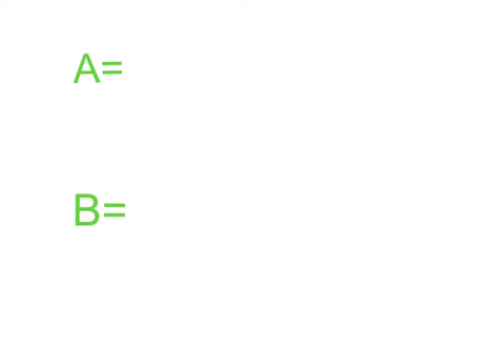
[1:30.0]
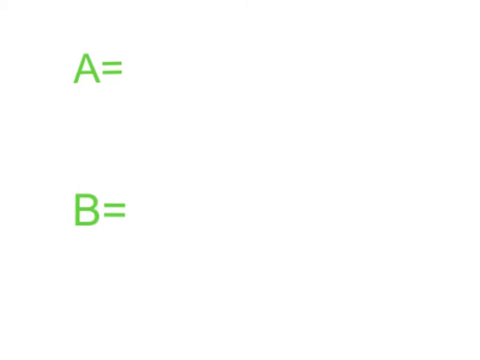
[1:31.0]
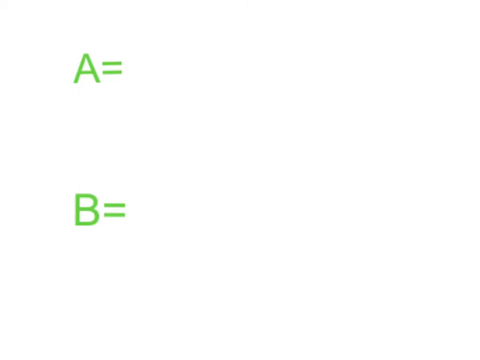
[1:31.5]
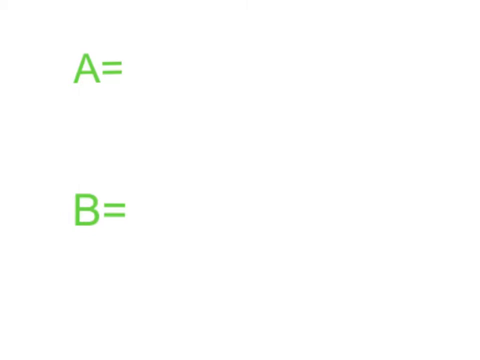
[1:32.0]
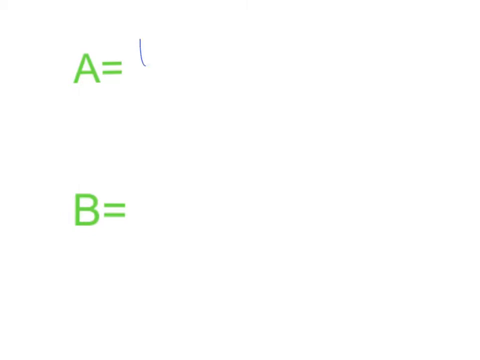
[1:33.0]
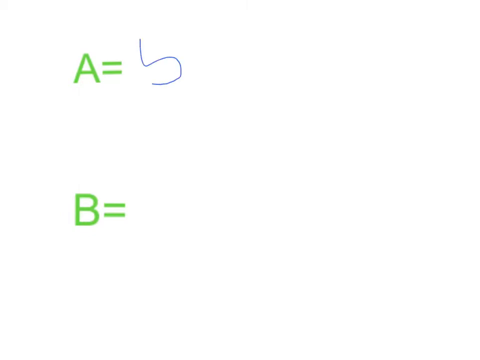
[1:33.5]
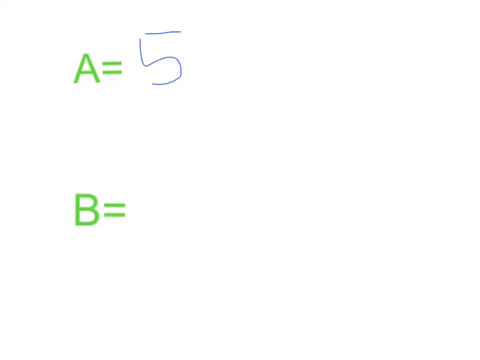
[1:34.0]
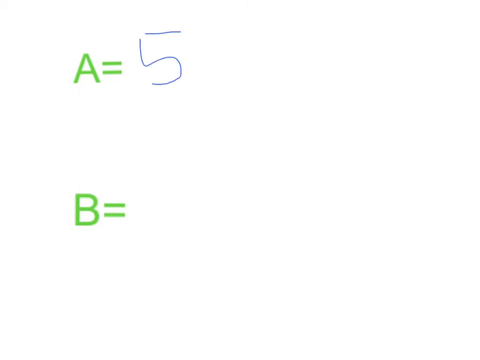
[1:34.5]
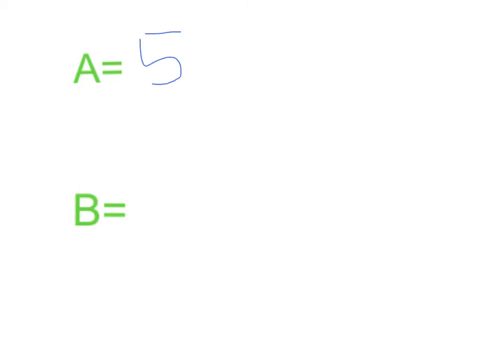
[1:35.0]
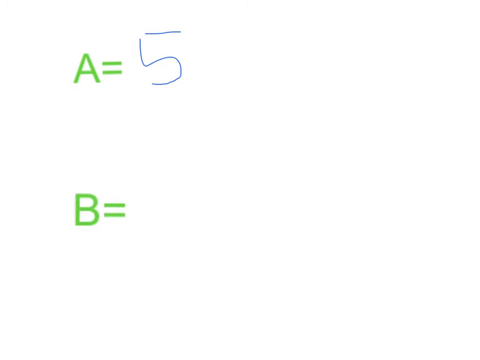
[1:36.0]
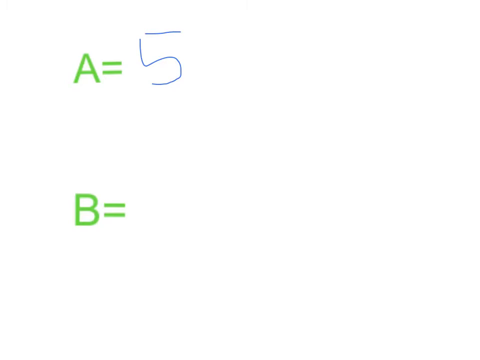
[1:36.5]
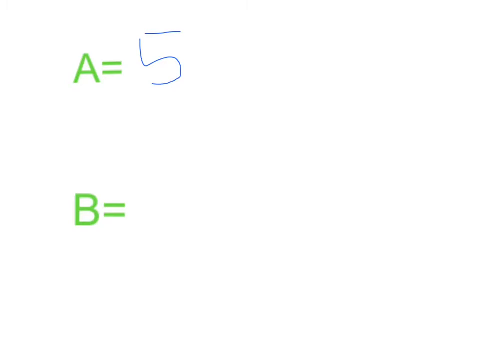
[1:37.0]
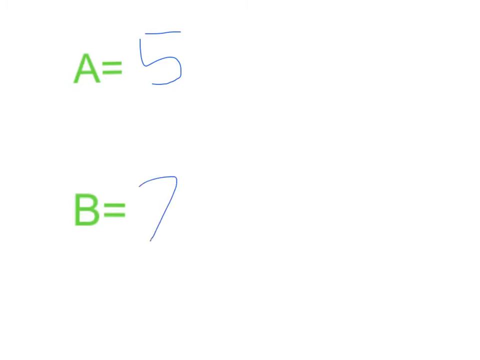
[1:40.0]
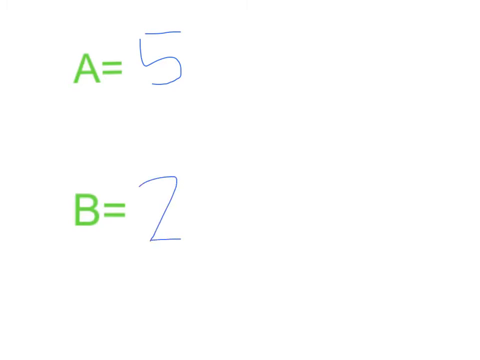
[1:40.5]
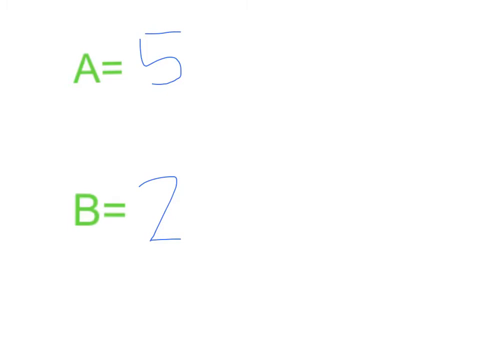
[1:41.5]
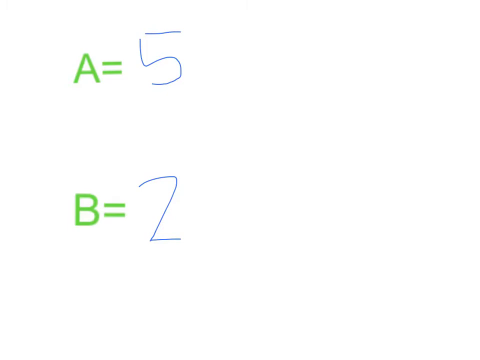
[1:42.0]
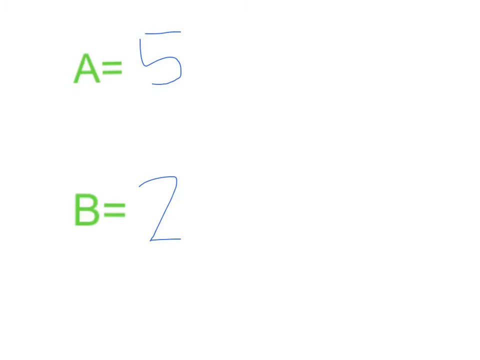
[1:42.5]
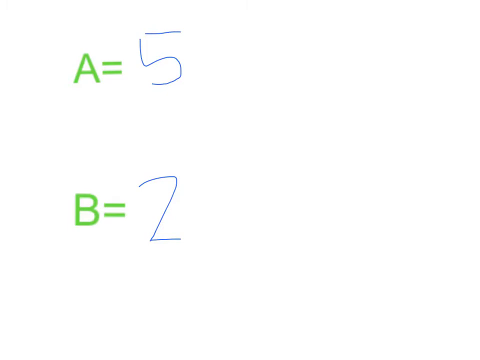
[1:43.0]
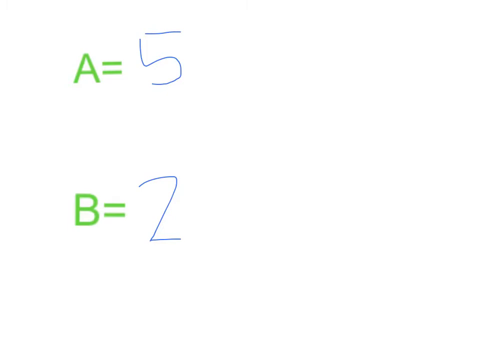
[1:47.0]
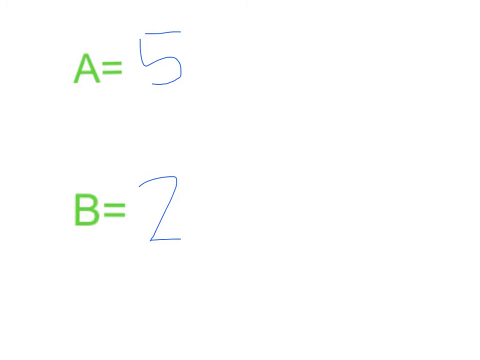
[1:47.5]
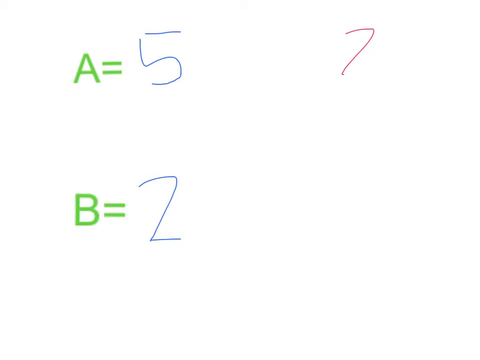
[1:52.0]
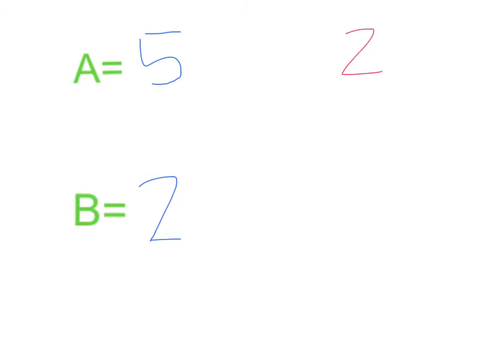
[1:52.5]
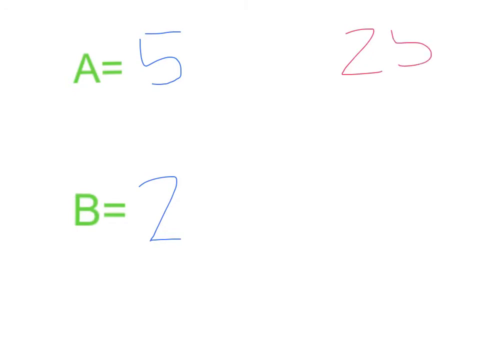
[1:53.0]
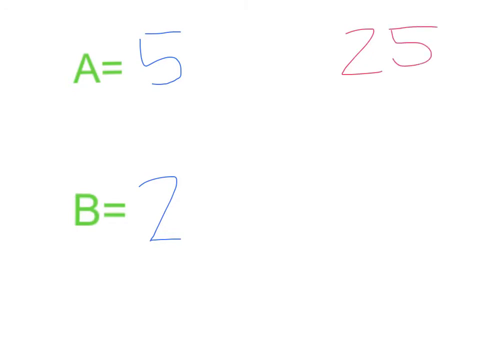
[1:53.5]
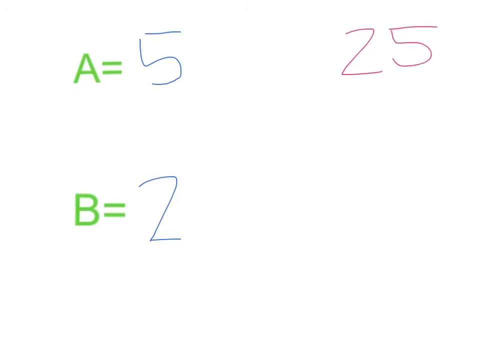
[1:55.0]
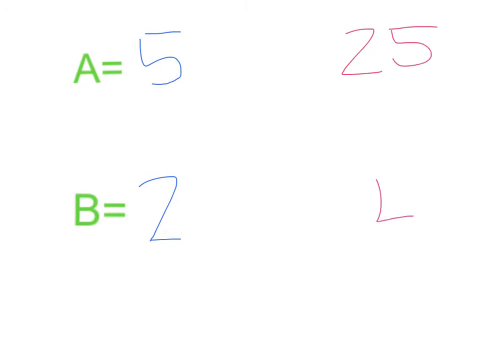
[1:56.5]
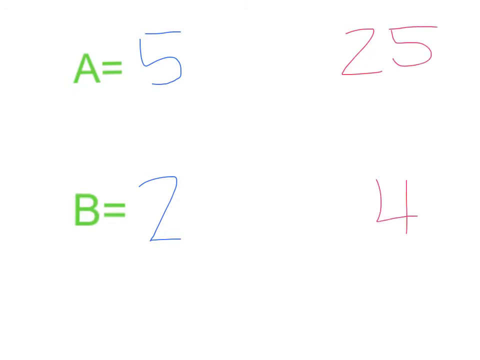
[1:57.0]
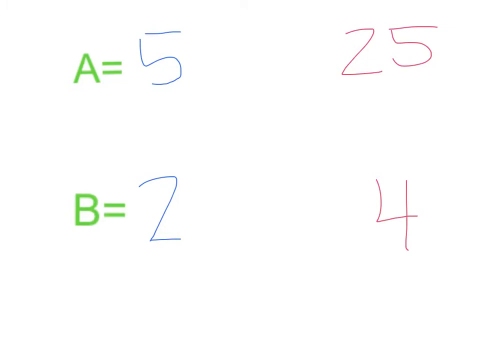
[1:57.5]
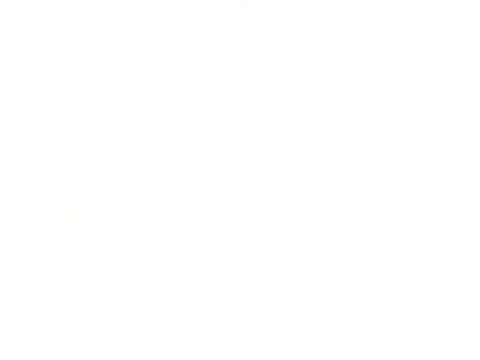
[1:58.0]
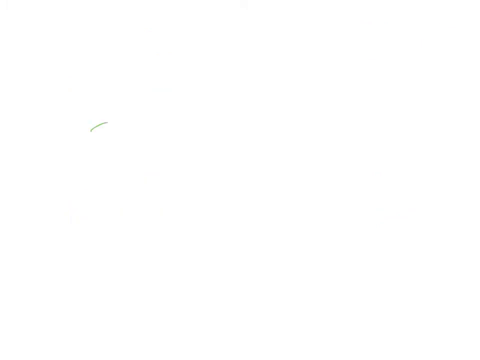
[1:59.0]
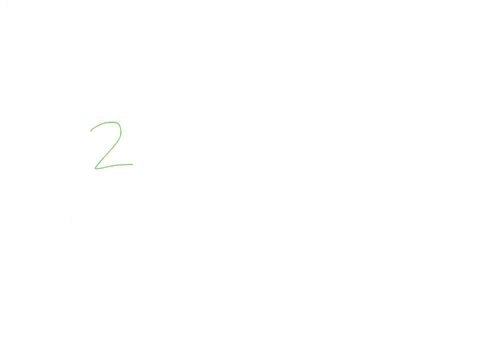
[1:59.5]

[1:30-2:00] Against a white background, two lines of bright green text read "A=" and "B=". After a few seconds, hand-drawn characters begin to appear in blue, looking as if somebody is writing them in. Somebody draws the number 5 right next to the "A=", and a few seconds later the number 2 next to the "B=". Then, on the far right of the screen along the line of the "A=", somebody handwrites the number 25 in red, the 2 first and then the 5. Along the line of the "B=", on the far right, the number 4 is written in red. That disappears from the screen, and just before the scene ends somebody starts writing the number 2 in green toward the center of the screen, with what looks like it might be an incomplete 5 next to it.